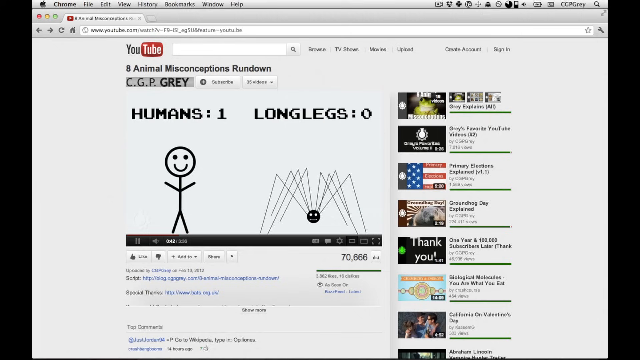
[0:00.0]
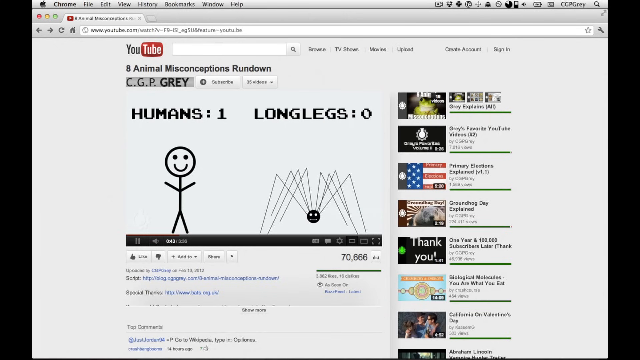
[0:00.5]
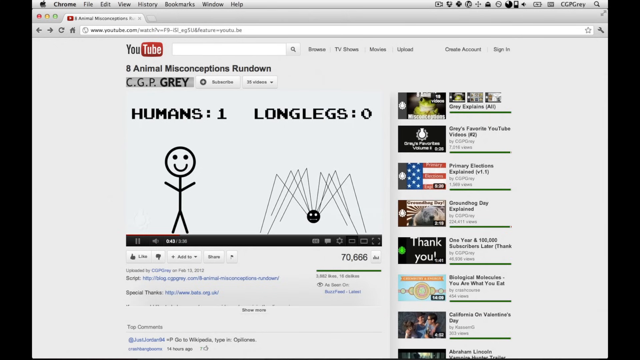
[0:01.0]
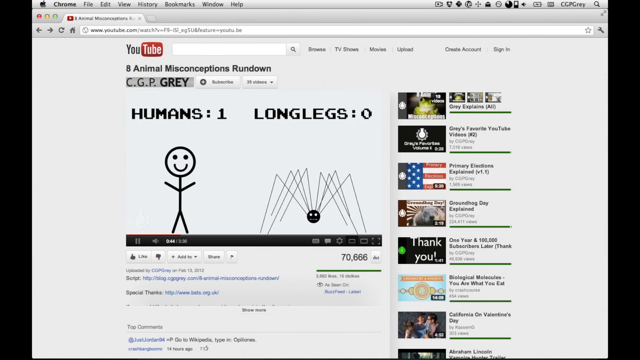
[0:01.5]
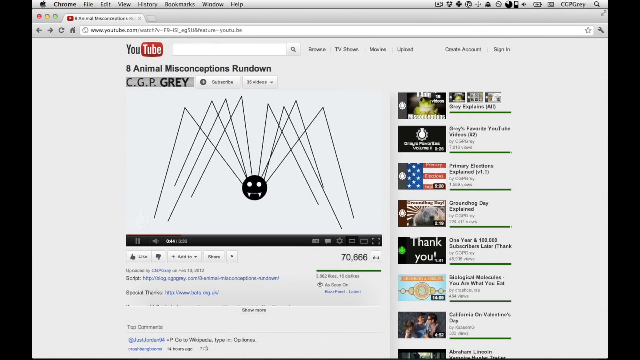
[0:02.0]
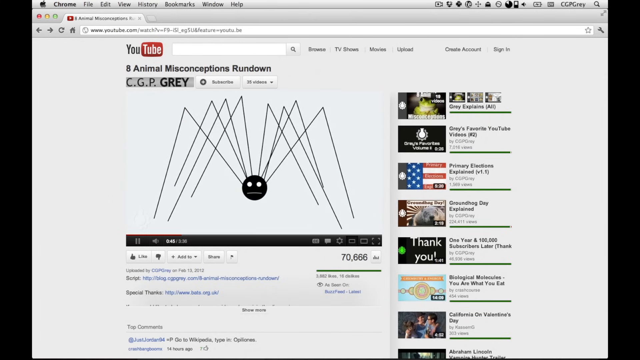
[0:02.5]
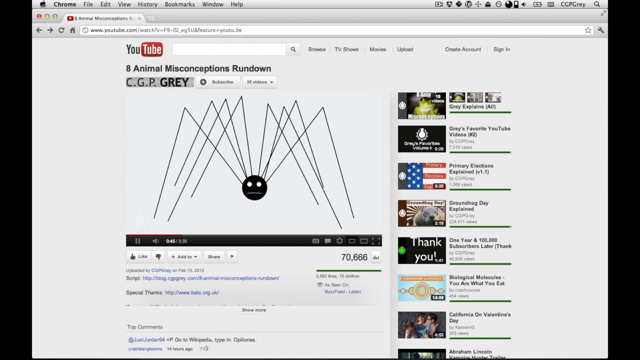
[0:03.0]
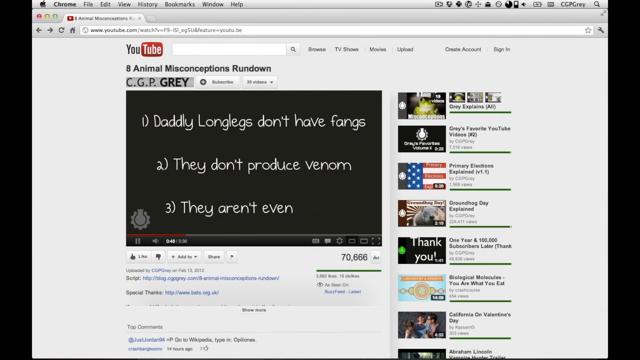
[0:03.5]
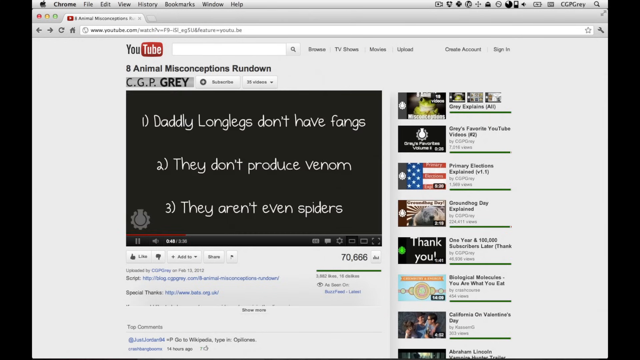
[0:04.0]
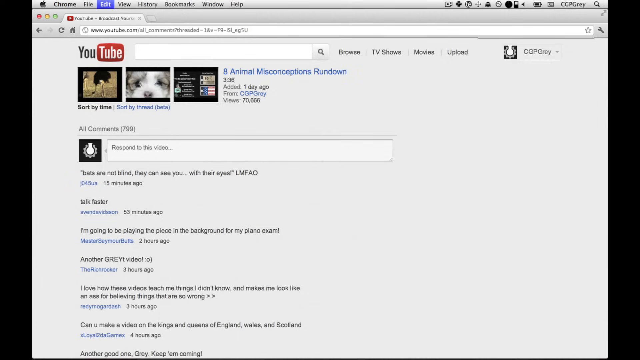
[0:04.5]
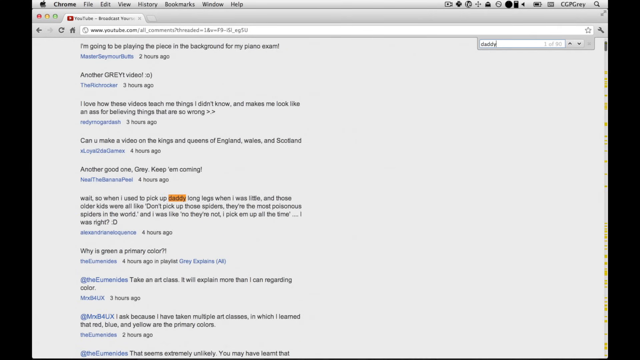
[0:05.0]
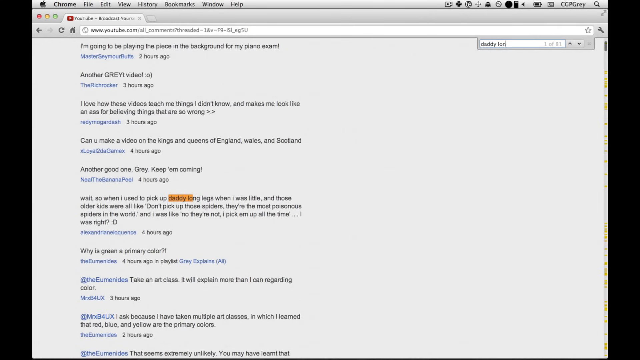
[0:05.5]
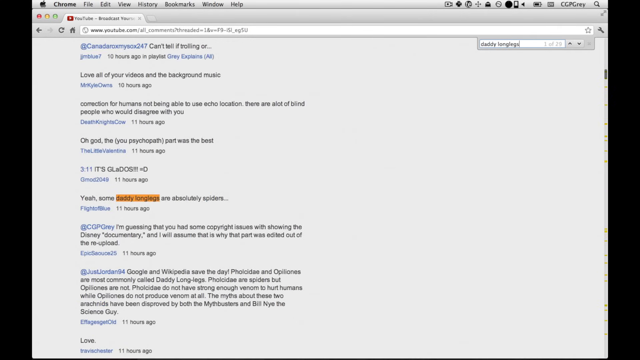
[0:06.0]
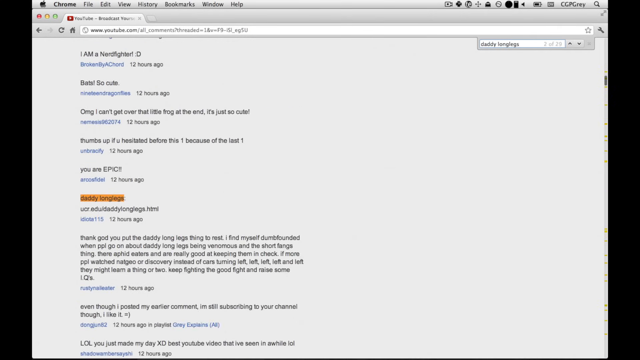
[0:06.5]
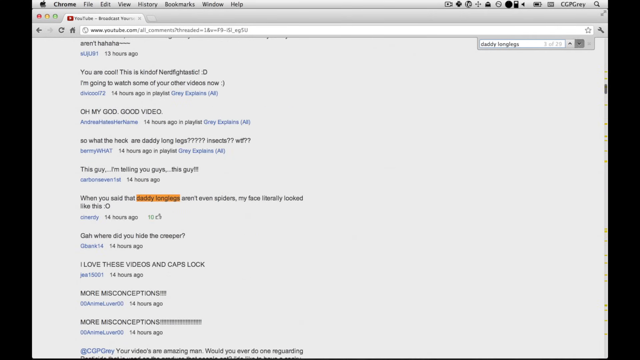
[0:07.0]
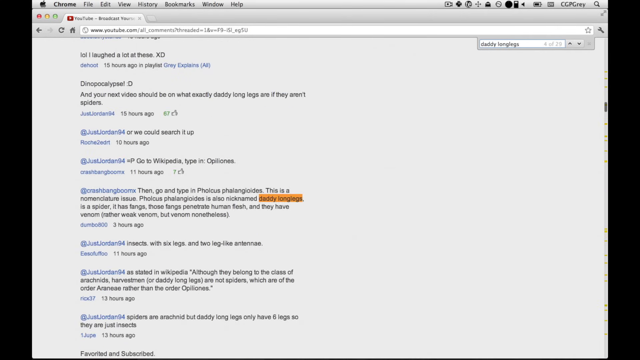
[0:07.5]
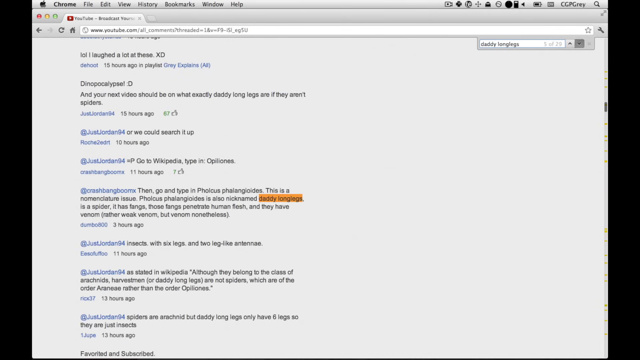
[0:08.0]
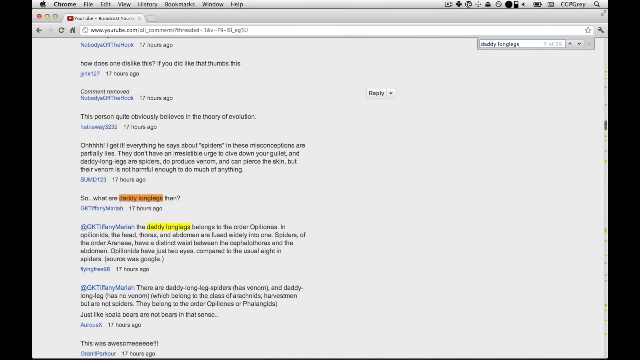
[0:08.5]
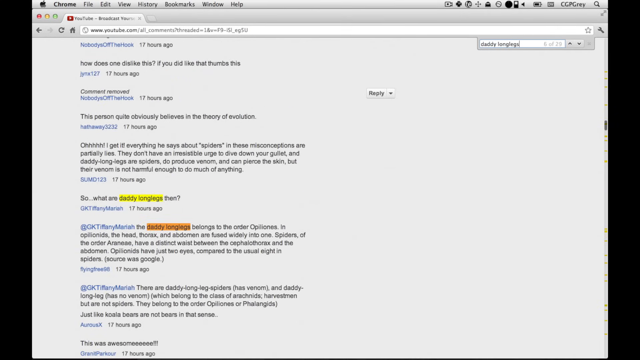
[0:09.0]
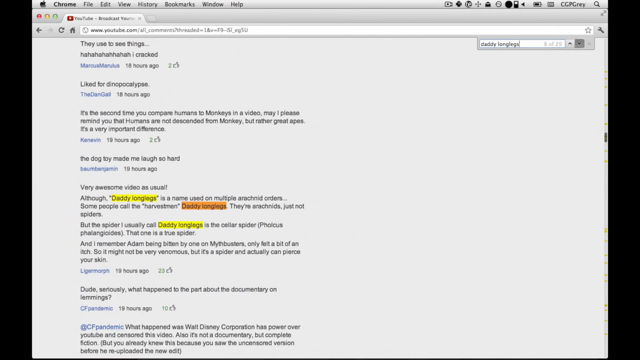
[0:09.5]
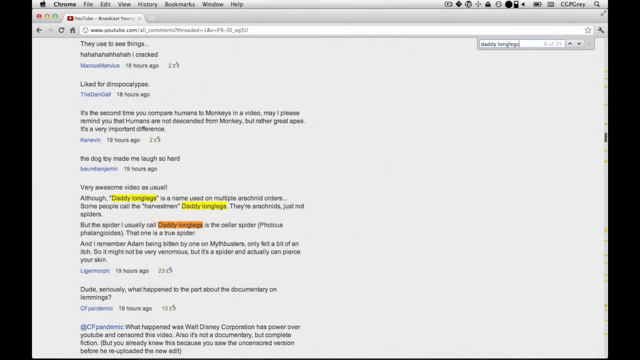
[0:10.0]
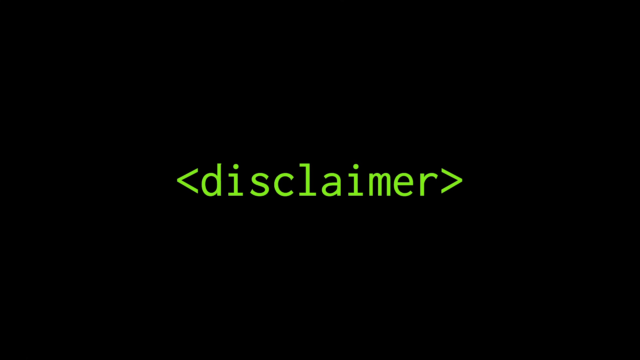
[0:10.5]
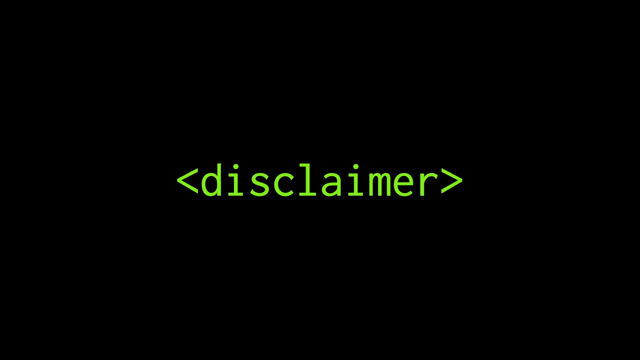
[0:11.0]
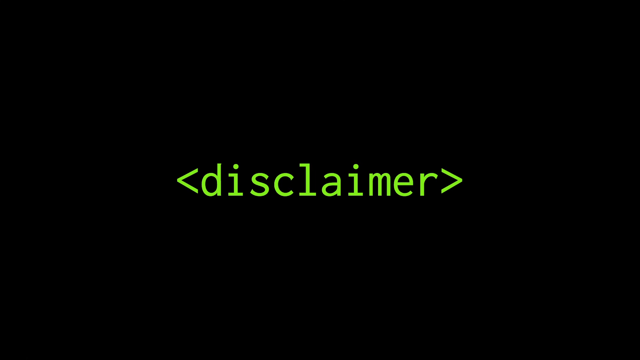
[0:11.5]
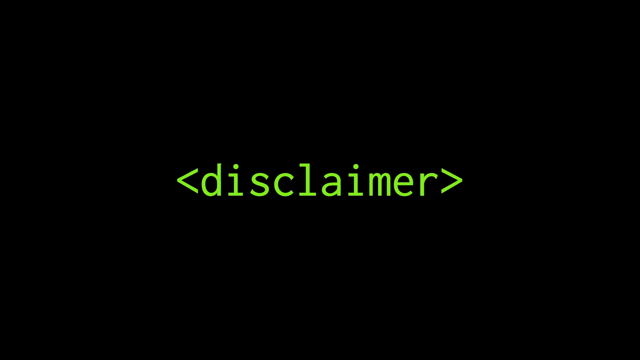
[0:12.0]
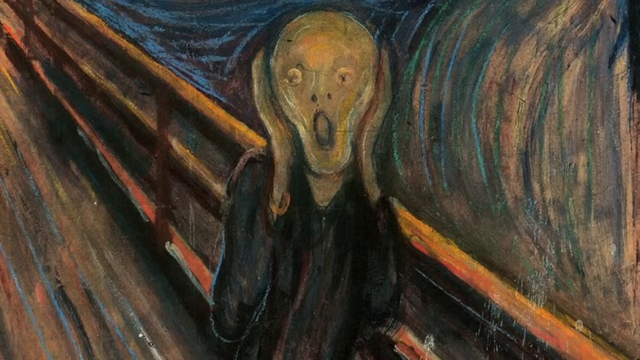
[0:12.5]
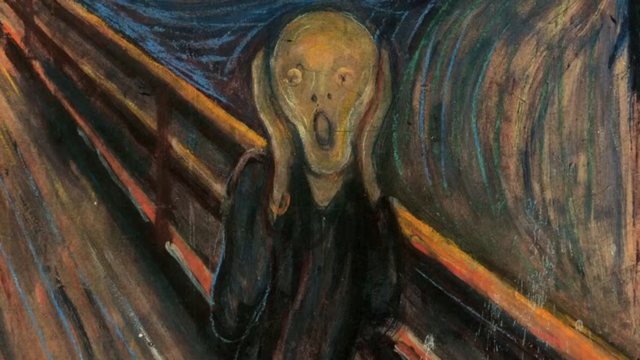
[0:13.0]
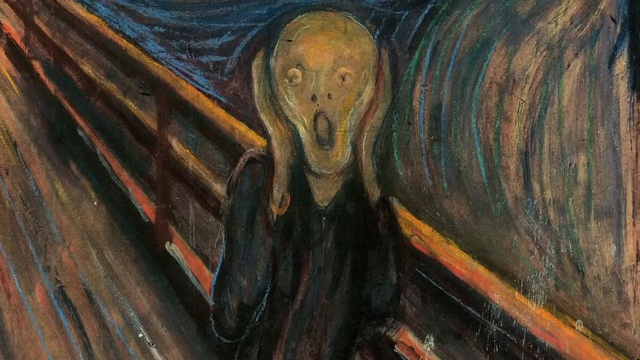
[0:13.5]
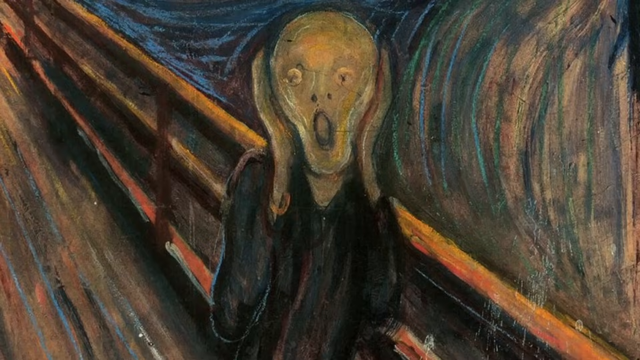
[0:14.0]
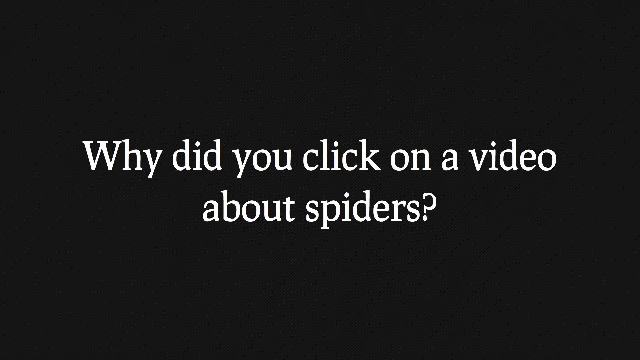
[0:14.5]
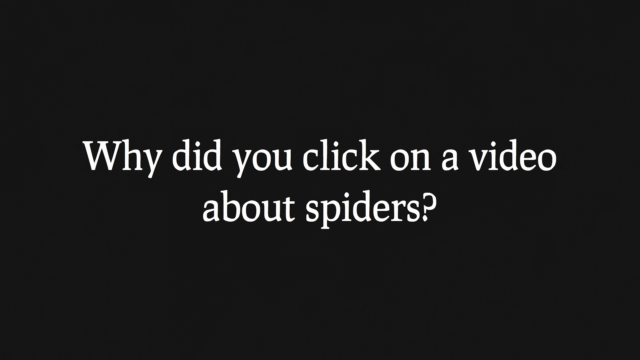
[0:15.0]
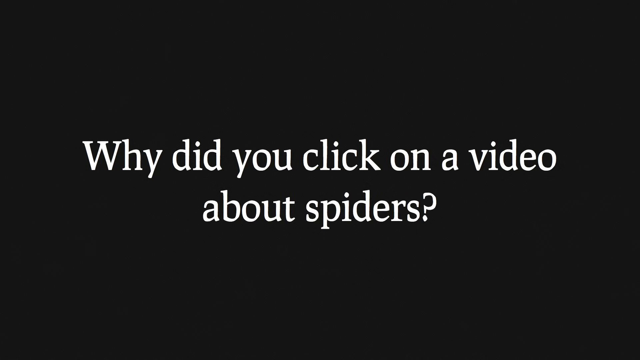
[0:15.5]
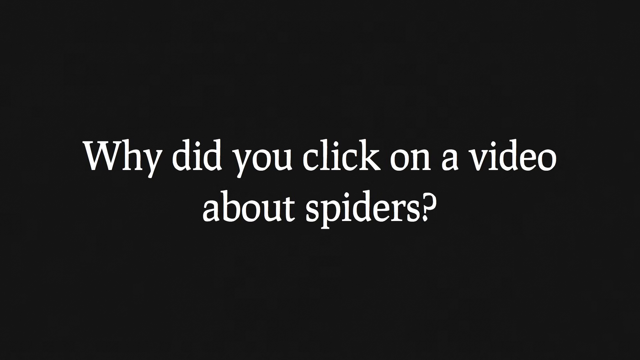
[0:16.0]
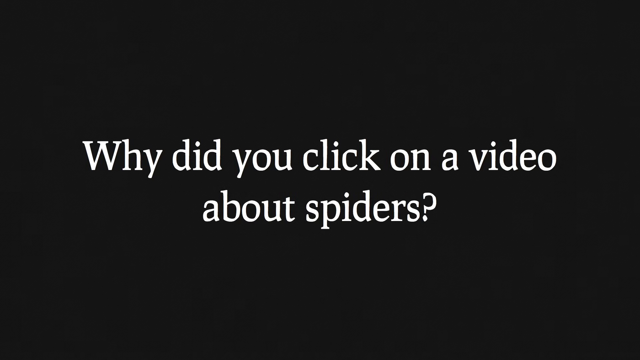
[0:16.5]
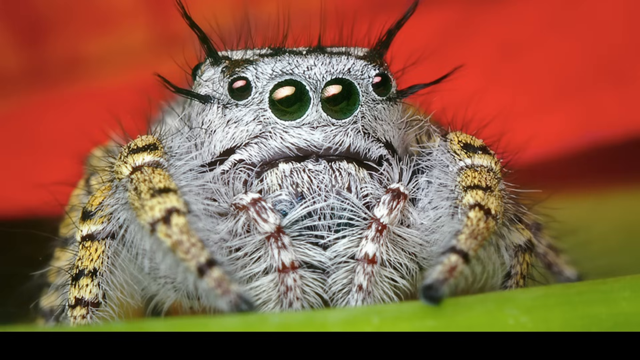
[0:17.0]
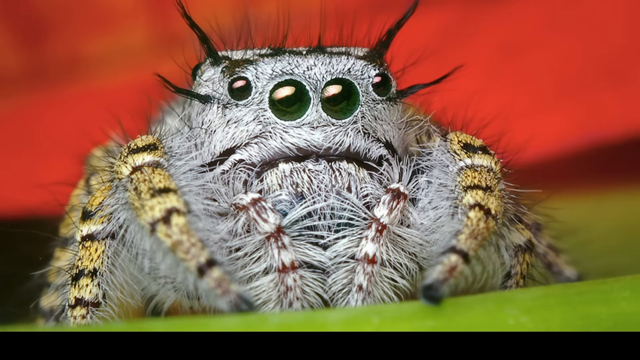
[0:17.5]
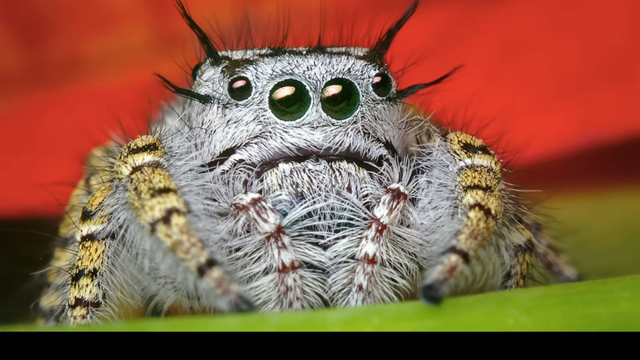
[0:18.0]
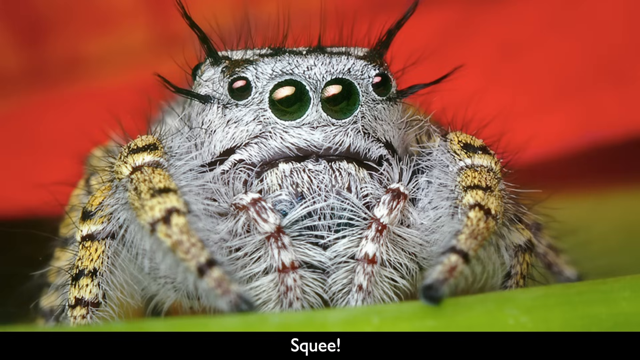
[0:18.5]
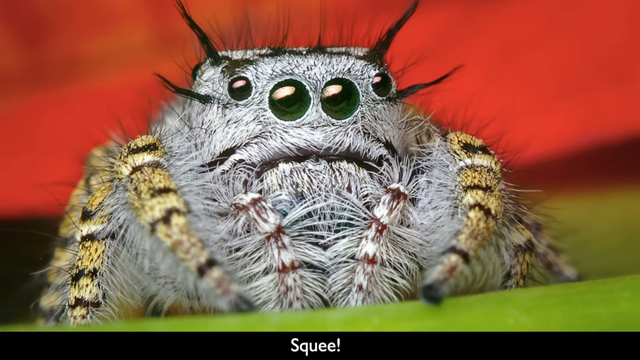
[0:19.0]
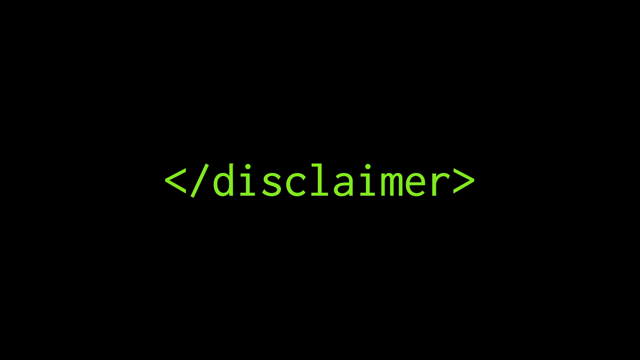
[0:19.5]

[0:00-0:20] A MacBook screen, apparently being recorded, is open on the YouTube page. It is the old YouTube page in a white format, with the "U" in white and "tube" in red, and it shows a video titled "8 animal misconceptions rundown". The video shows a human stick figure with the number one and what appears to be a spider with long legs. Toward the right side of the screen are the other videos that have been watched before. The spider grows fangs and then disappears. Next comes a title page with three bullet points: "daddy longlegs don't have fangs", "they don't produce venom" and "they aren't even spiders". The view shifts to a search function within the YouTube page, where the person searches for daddy longlegs; numerous results appear in orange and then yellow, and the view flicks between them. A black title screen follows with a disclaimer in green in the centre, then a photo of the famous painting The Scream, showing the figure on the bridge in colours including brown, blue, red, black, a sand-like colour and green. A title screen then says "Why did you click on a video about spiders?", followed by a photo of an actual spider zoomed in at its maximum. The spider has white hair all over and four visible green eyes, and it seems to have four horns made of the hair. Its legs are white, yellow and black and seem to be on either side of the body, and the two front legs seem to be made of white and red hair.